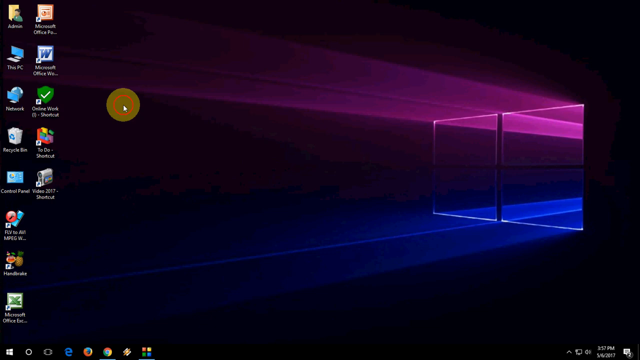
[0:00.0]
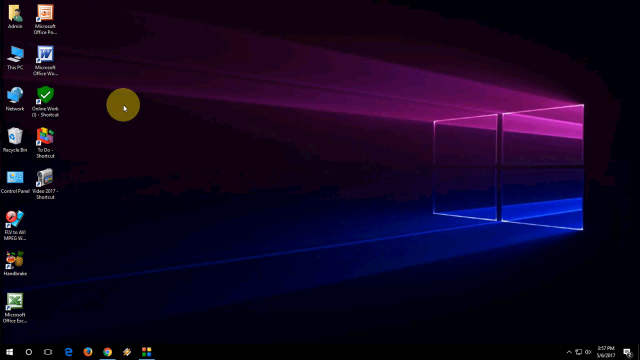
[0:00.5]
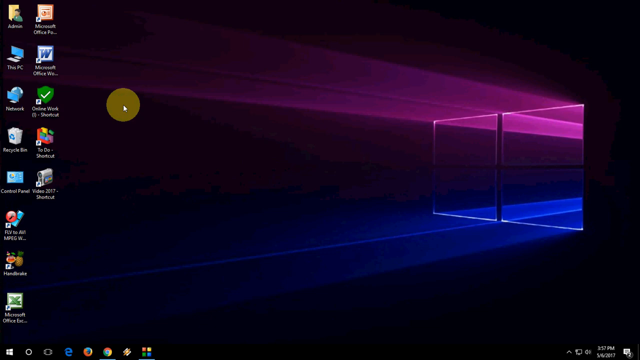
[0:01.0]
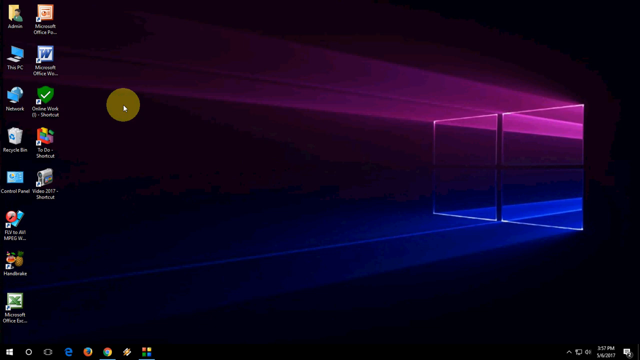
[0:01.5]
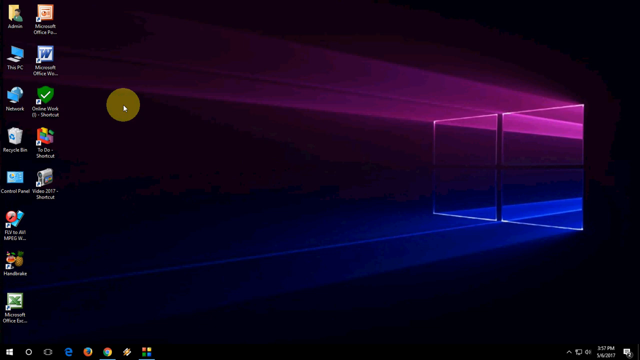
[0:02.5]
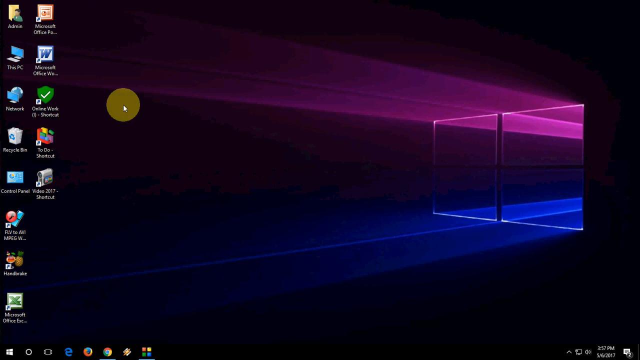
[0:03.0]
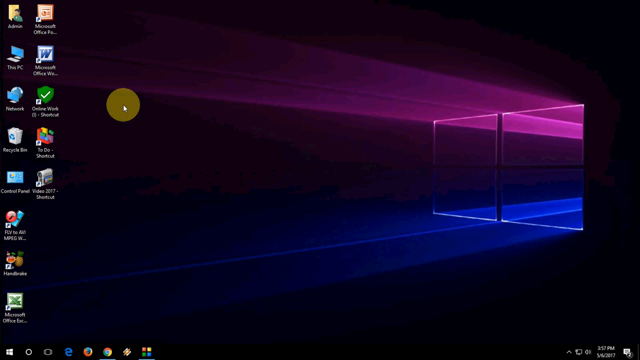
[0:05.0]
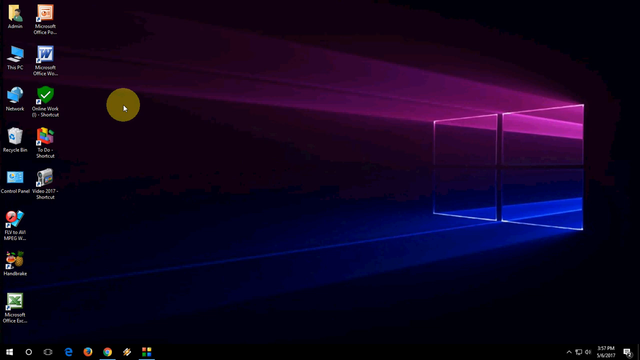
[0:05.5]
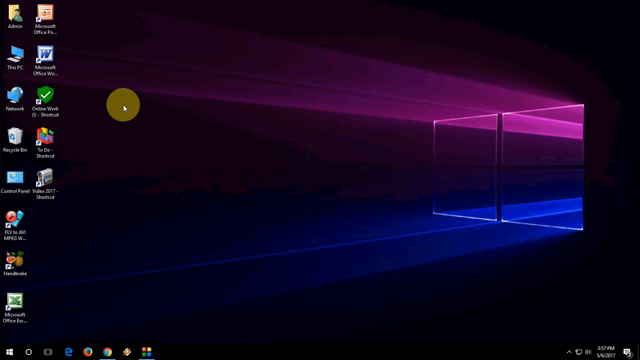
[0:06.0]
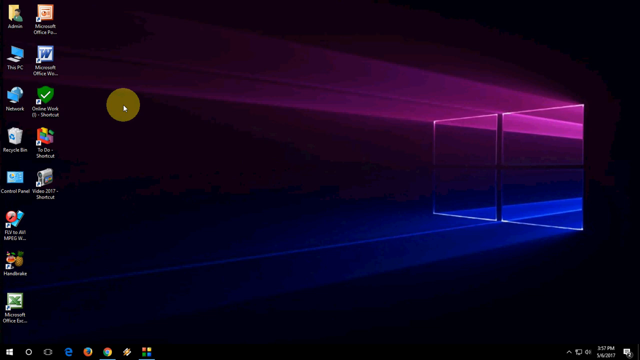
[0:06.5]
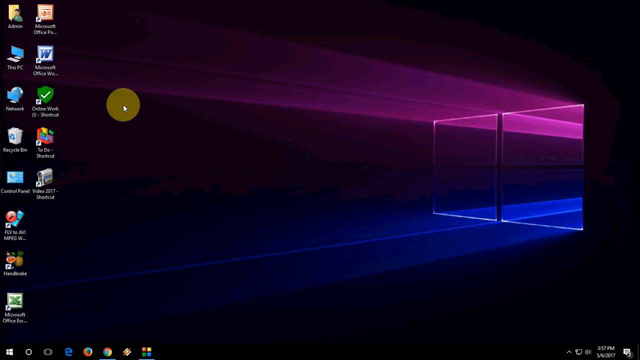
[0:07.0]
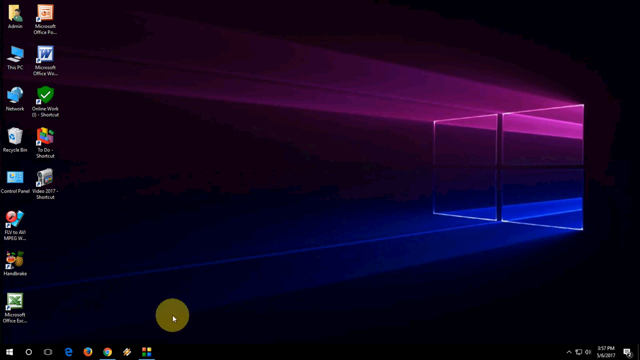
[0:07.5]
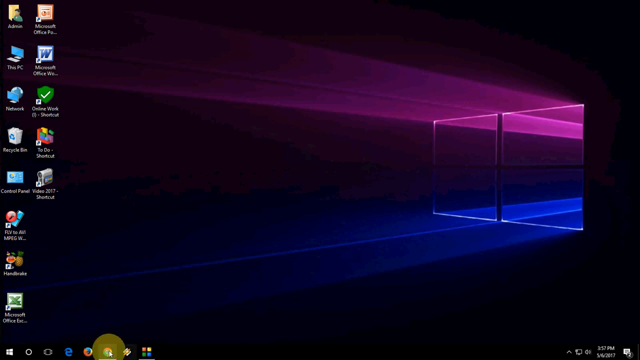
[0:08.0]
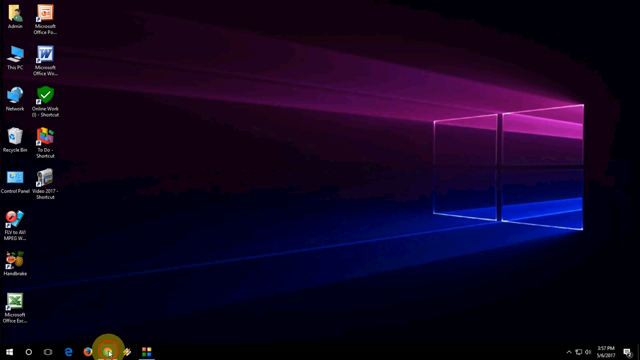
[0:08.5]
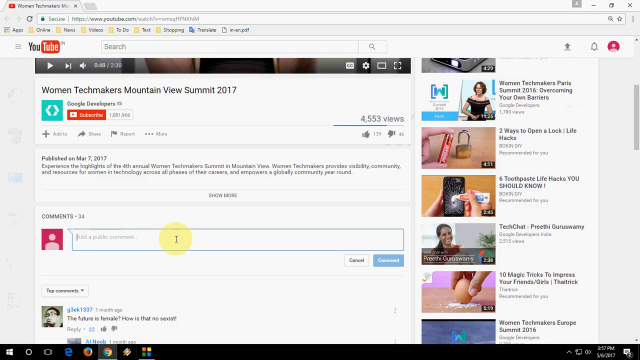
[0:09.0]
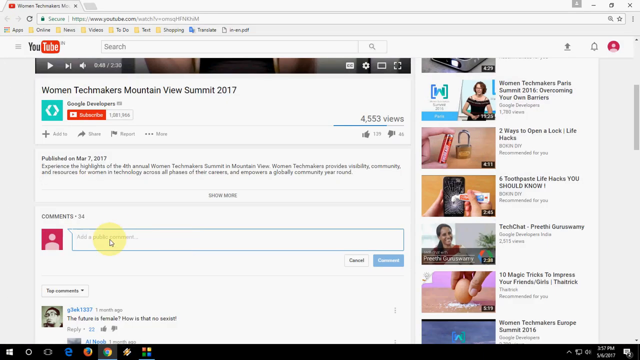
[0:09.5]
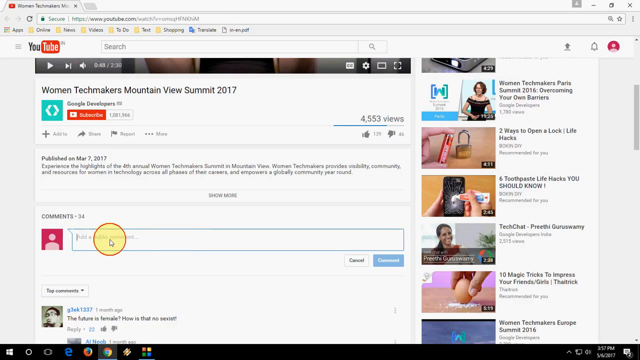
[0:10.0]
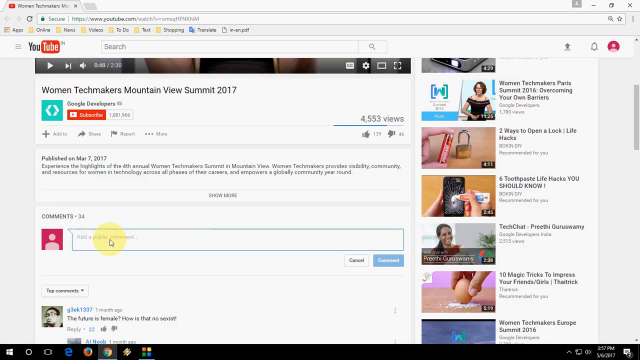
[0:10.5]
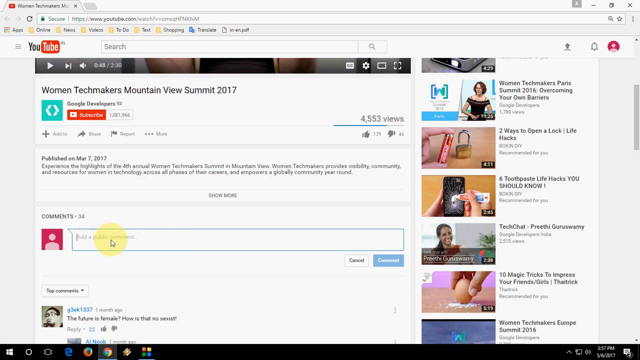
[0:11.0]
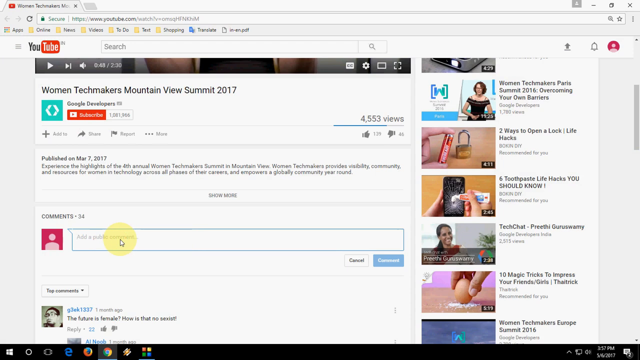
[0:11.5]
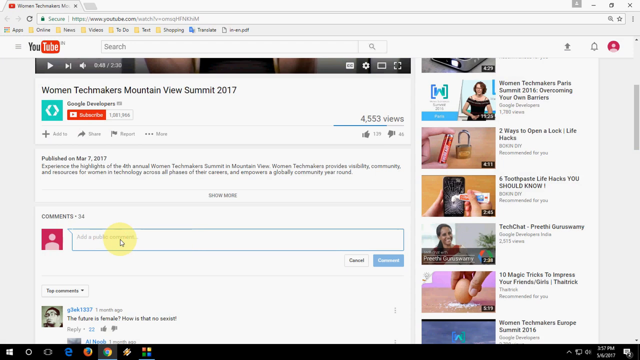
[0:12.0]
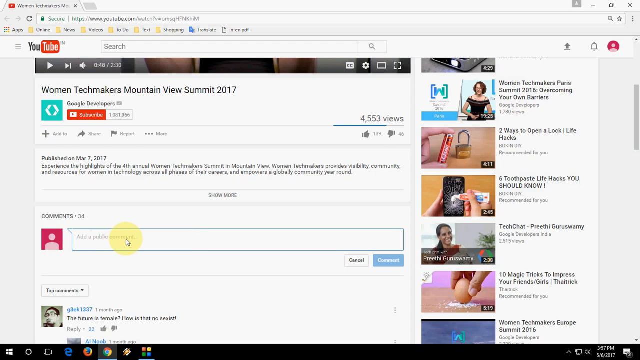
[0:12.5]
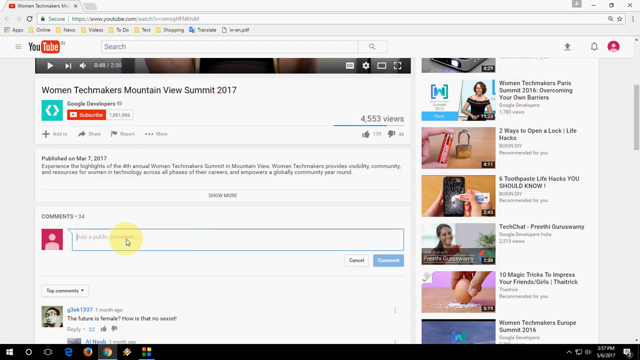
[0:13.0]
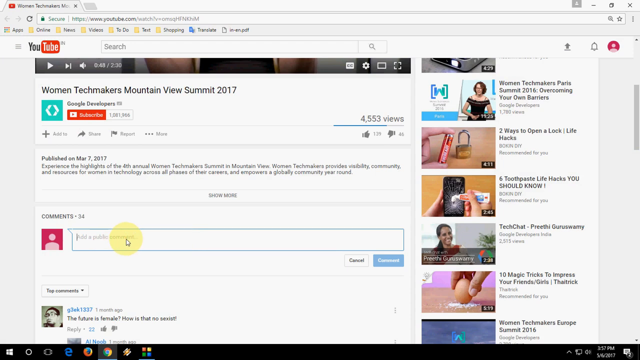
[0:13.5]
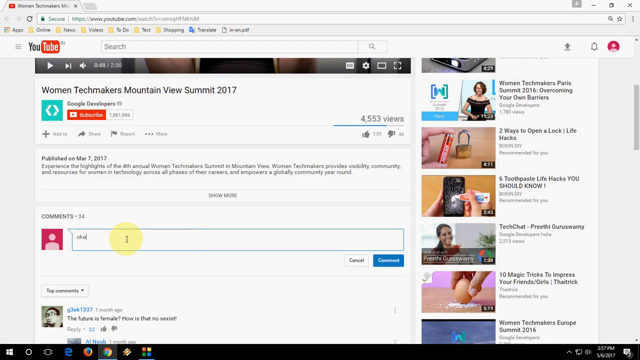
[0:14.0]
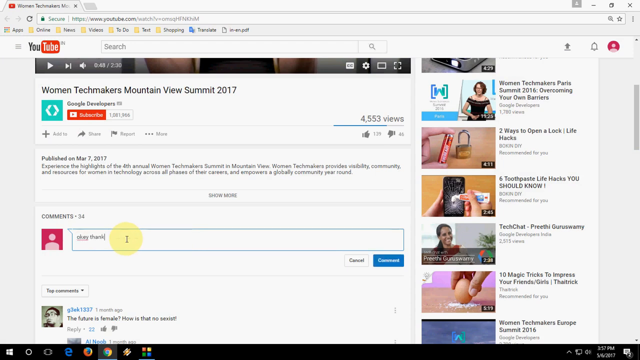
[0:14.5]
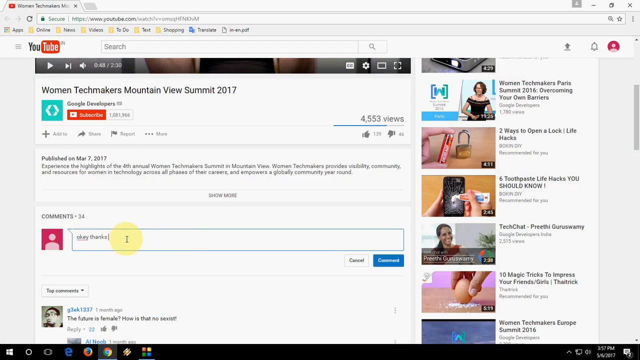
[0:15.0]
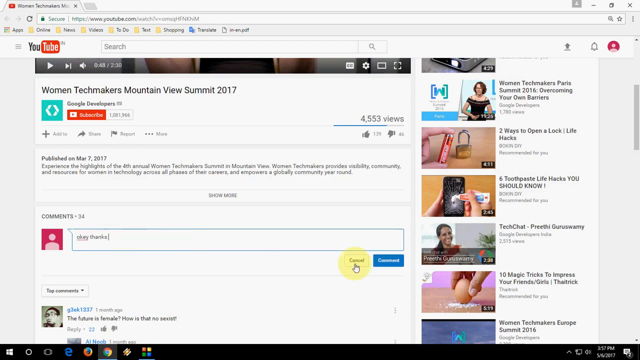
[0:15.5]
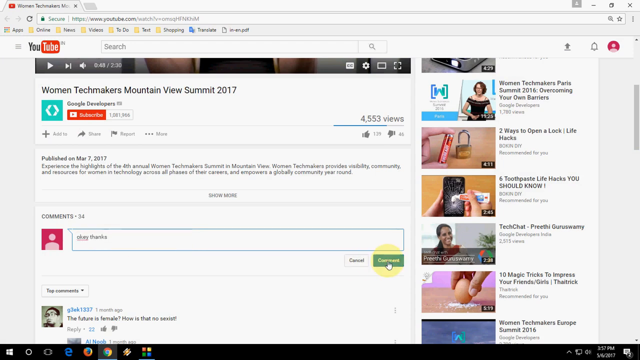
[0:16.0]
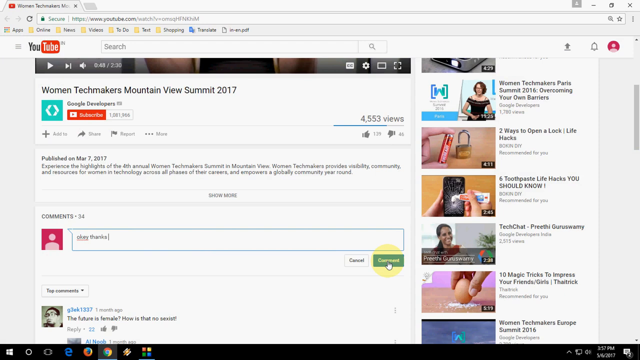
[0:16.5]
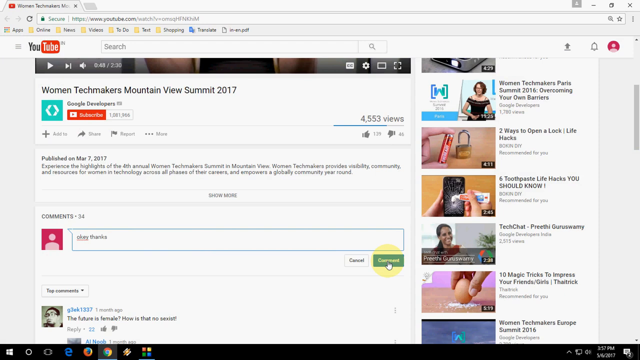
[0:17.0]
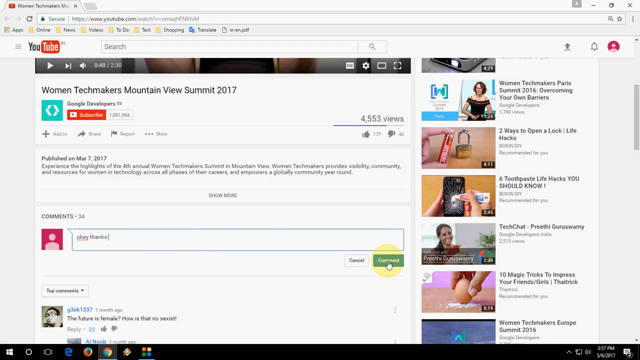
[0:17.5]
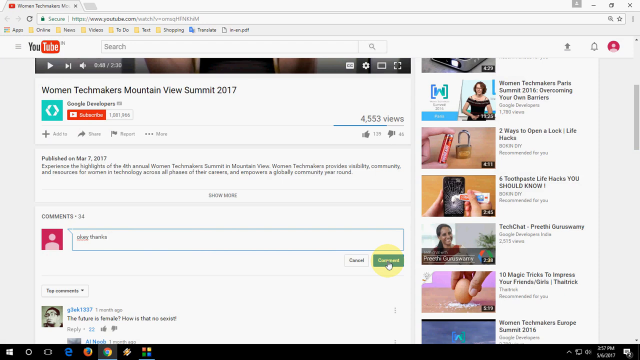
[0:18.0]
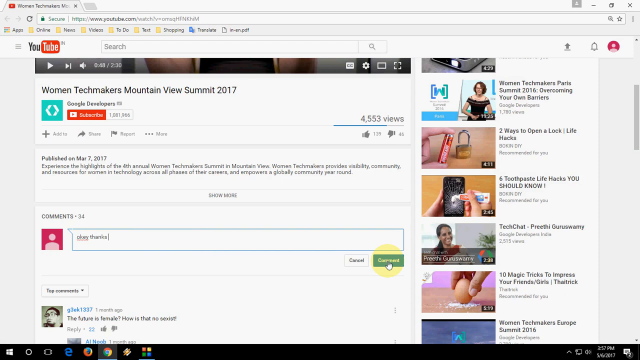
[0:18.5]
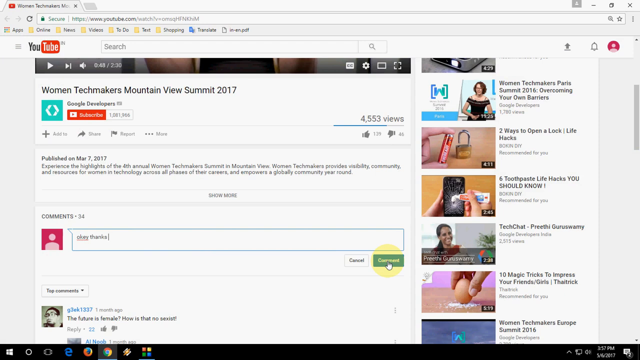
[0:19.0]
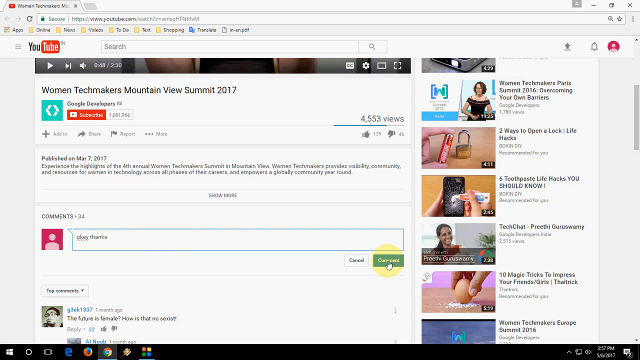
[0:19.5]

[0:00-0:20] What looks like a screen recording of someone's PC desktop is shown. The cursor is highlighted with a yellow circle and a red circle around it so it can be seen in the screen capture. It looks like a tutorial video in which YouTube is brought up. The desktop is a very standard-looking black Windows desktop with typical icons on the left-hand side. A YouTube browser is then brought up, and the person clicks on a comment to add a comment; this may be a tutorial on how to add comments to YouTube videos. No additional text is added to the screen, only the cursor moving around.